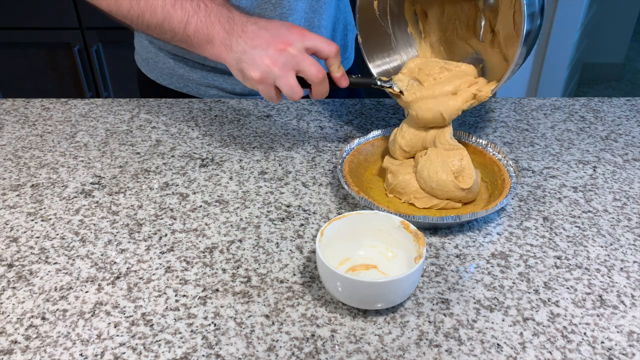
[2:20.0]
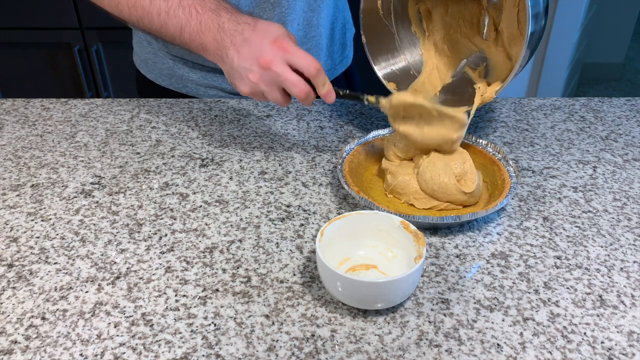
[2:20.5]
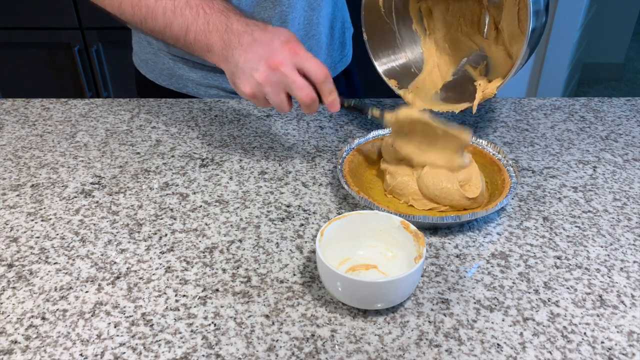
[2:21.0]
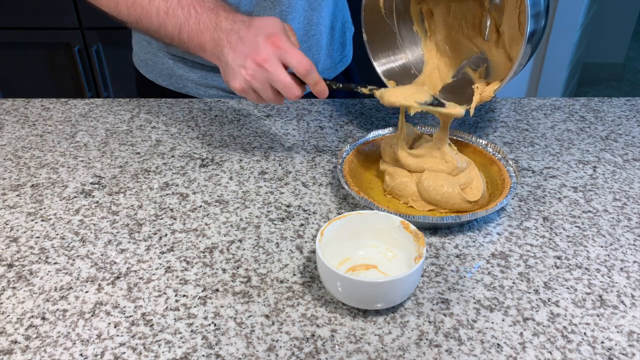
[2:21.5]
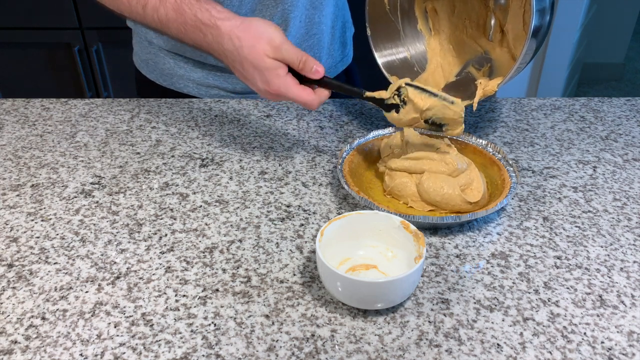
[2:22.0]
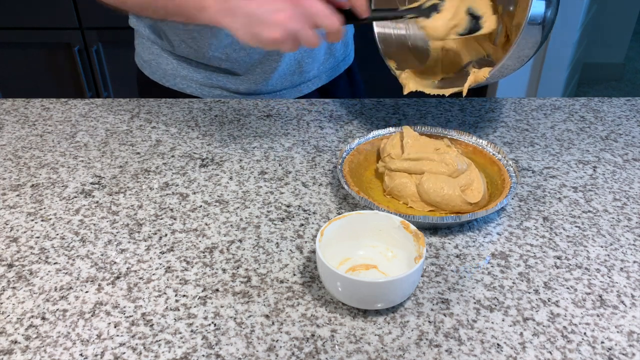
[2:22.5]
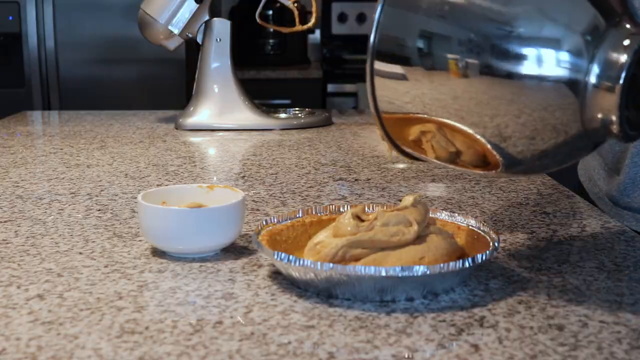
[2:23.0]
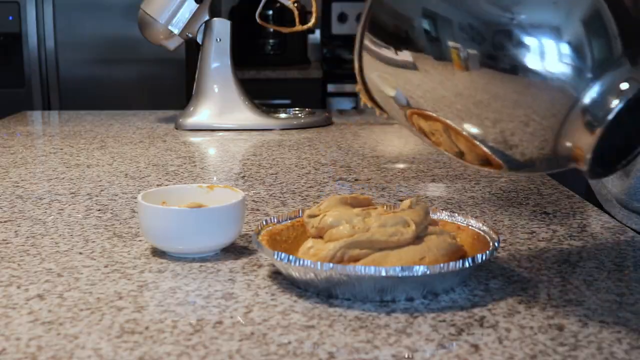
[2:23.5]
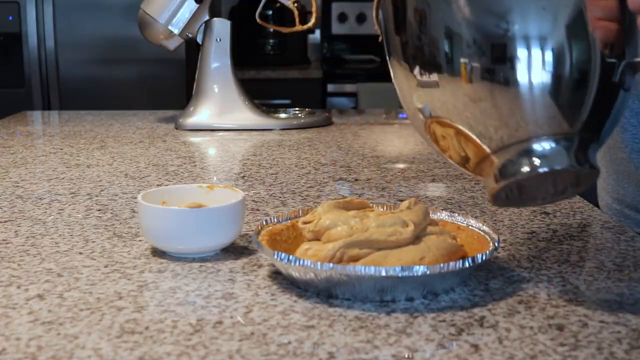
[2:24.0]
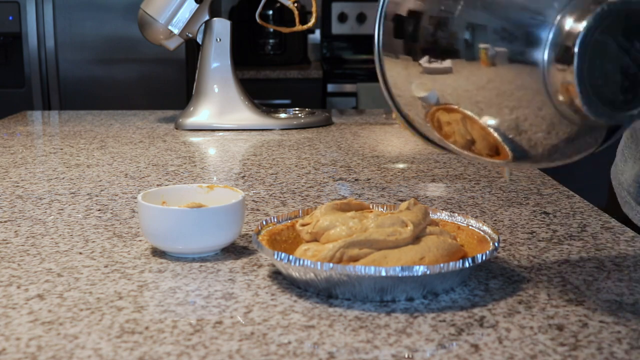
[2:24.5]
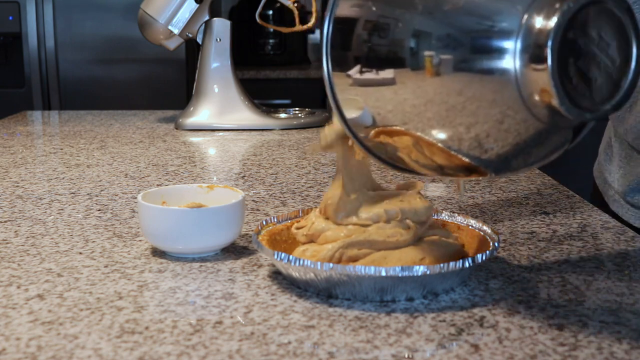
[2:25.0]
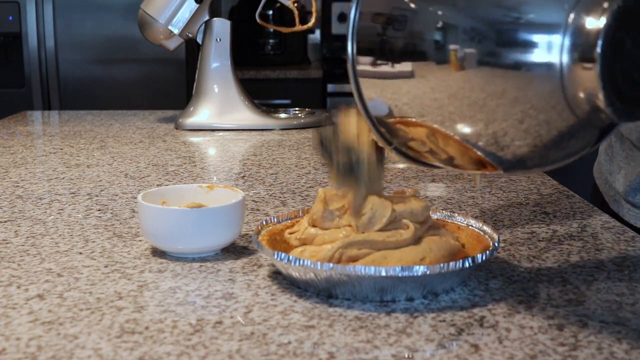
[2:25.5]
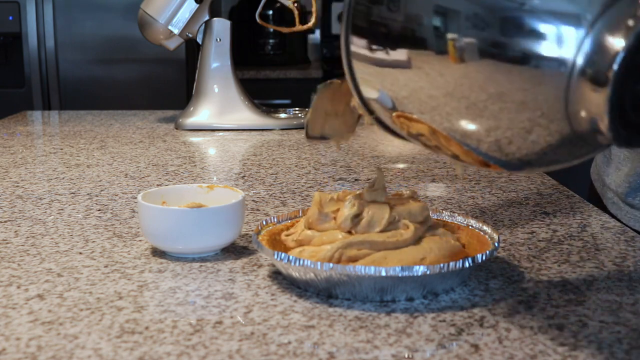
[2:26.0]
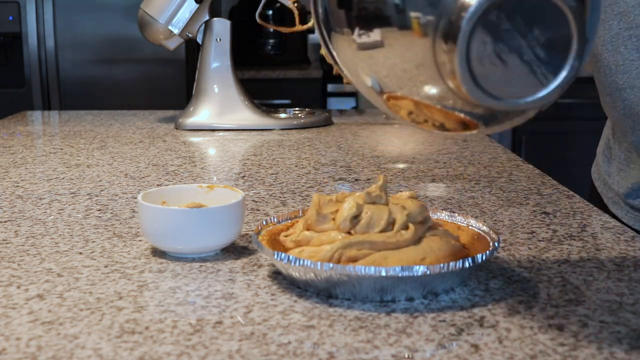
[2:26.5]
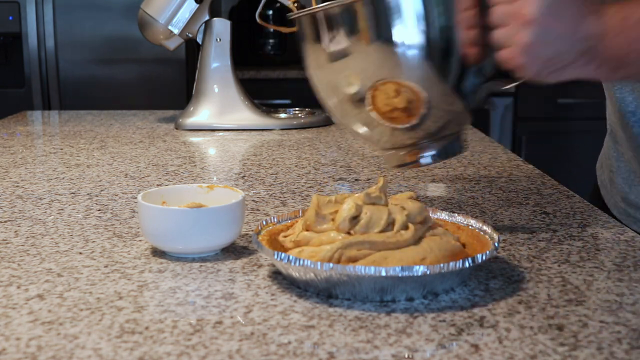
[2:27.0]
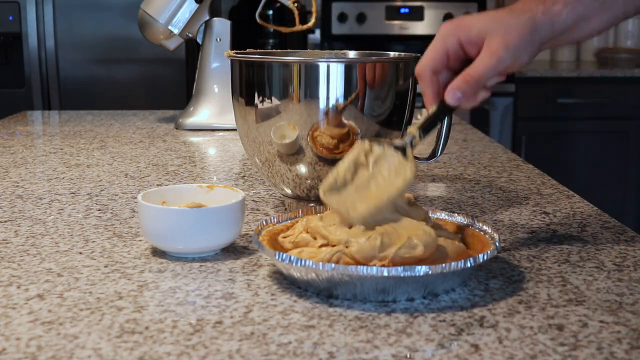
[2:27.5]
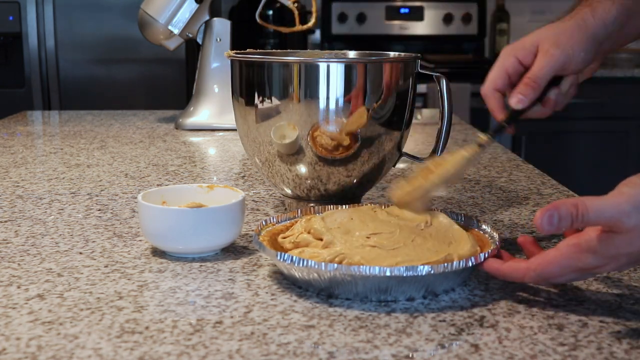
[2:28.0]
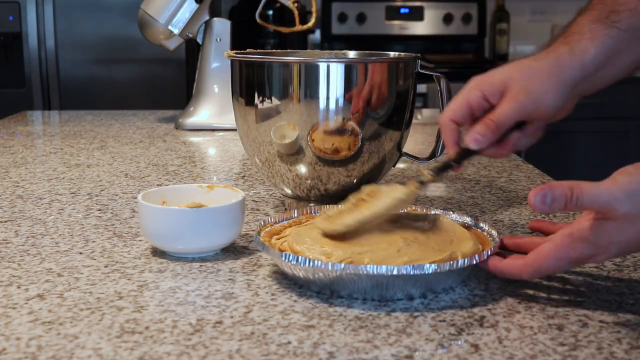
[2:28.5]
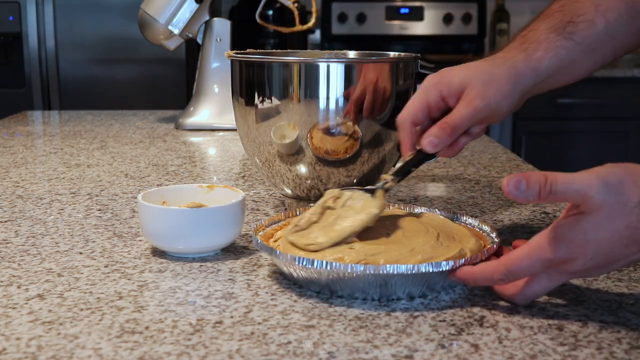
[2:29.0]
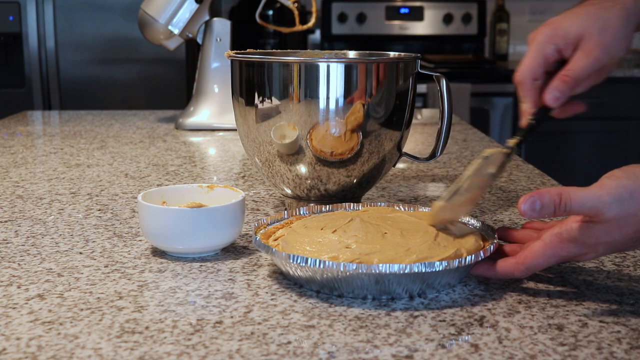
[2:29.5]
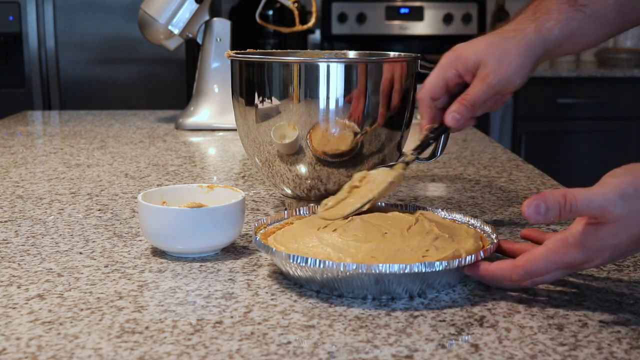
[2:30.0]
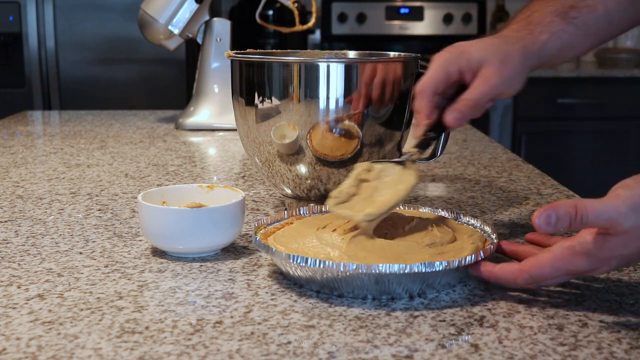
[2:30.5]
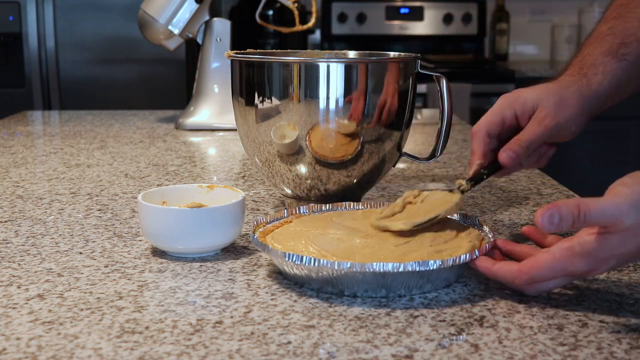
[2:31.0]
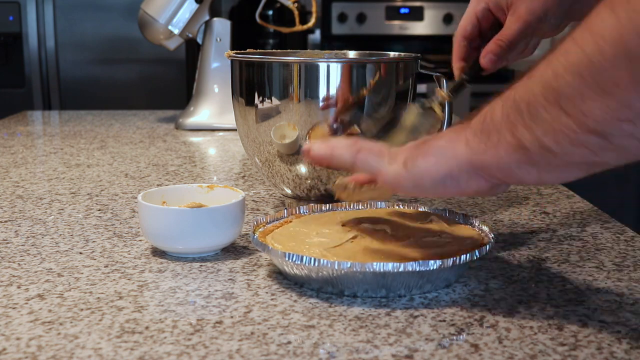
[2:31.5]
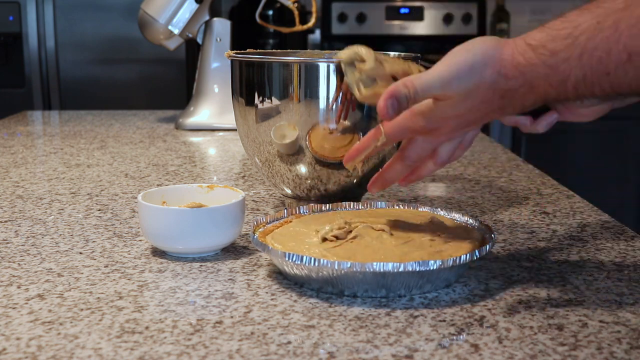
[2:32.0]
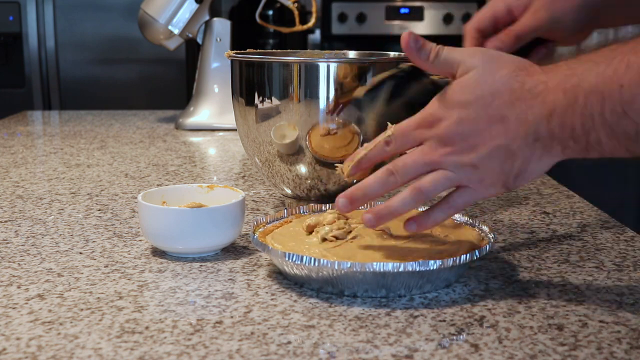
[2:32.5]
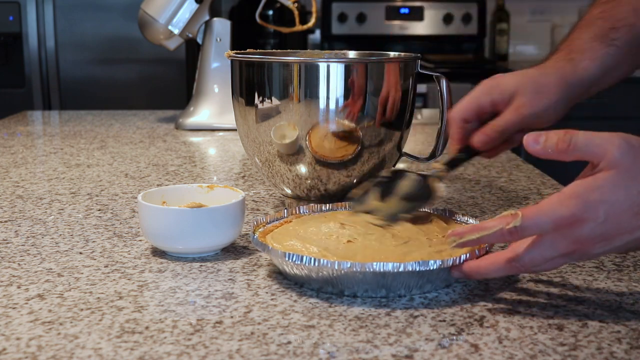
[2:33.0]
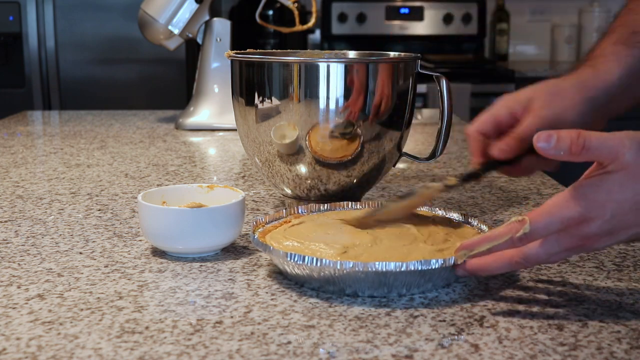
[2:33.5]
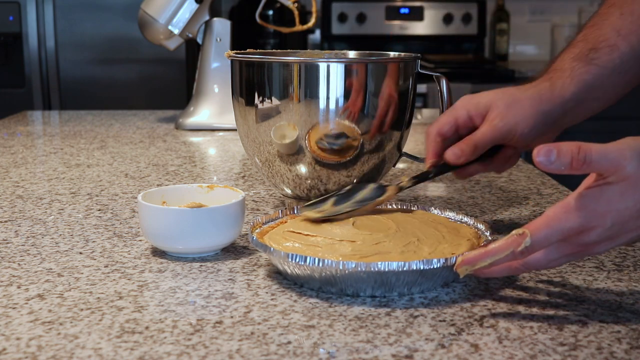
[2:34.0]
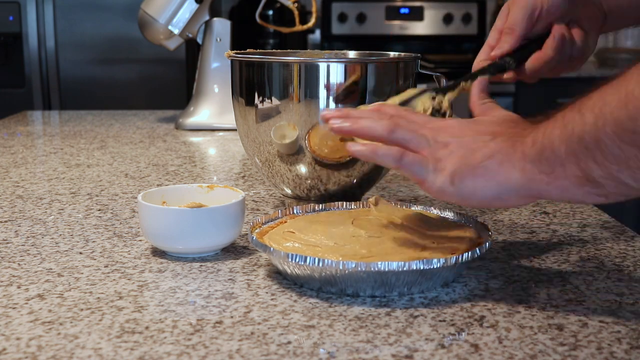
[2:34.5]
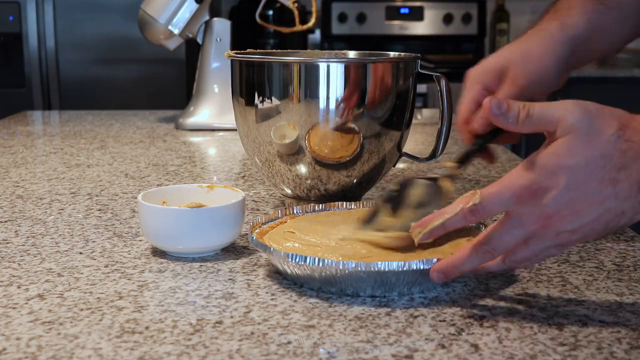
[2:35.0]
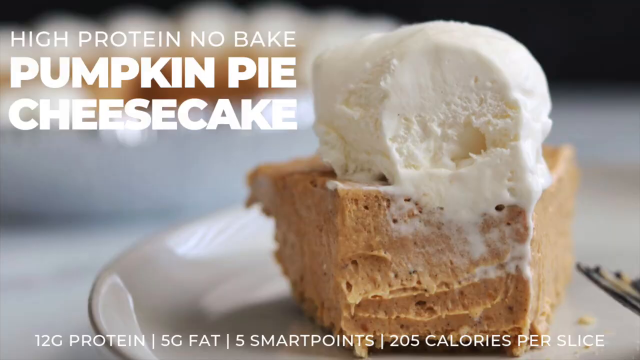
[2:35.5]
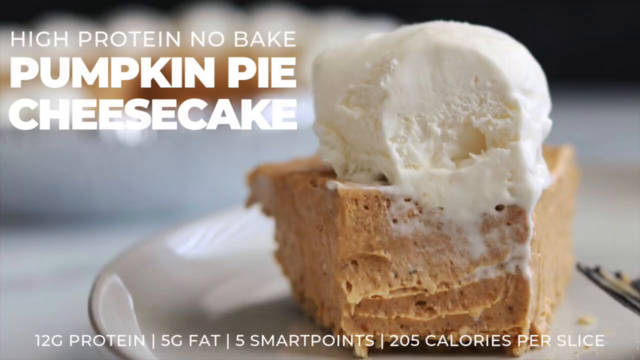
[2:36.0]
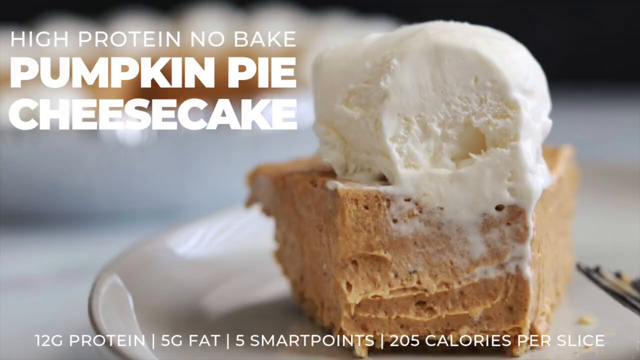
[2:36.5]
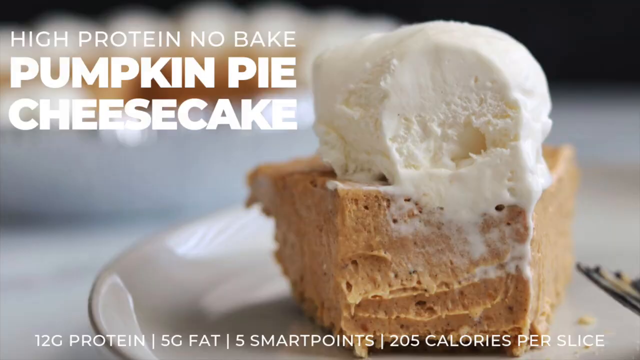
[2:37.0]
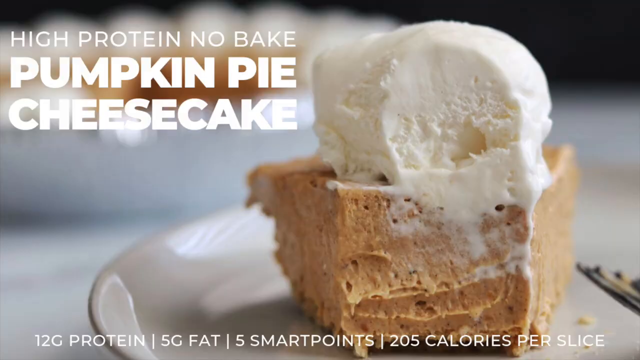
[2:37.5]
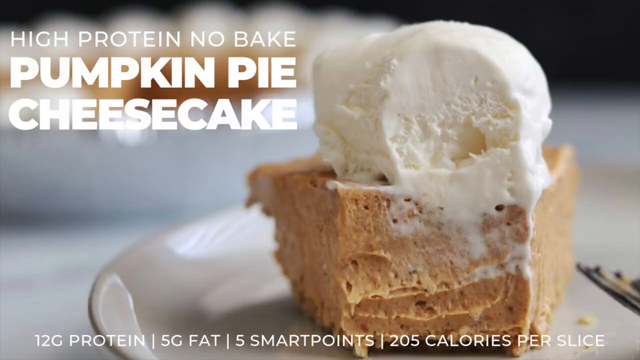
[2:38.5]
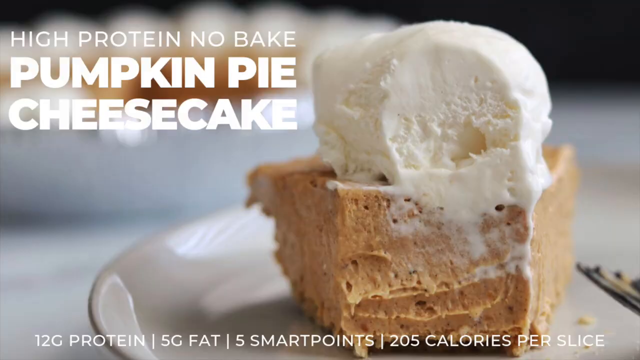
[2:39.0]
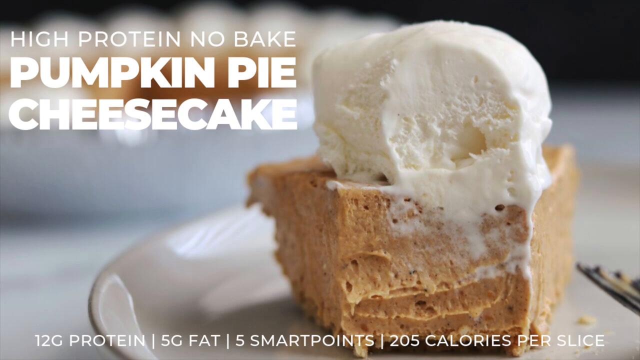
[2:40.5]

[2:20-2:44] On the countertop there are two or three bowls, one raised in the air to pour the creamy mixture. The man scoops the mixture with the black spatula; the white bowl is empty and the substance is poured into the silver plate. He pours the substance, scooping every bit, and levels it. He uses his finger to remove the excess creamy substance from the black spatula, dropping it into the bowl with the rest. Then the text "high protein no bake pumpkin pie cheesecake" appears.